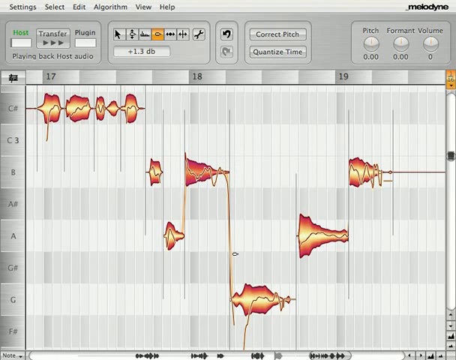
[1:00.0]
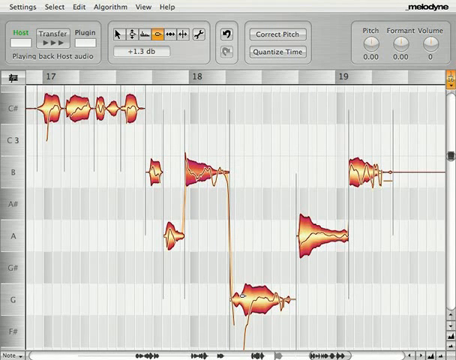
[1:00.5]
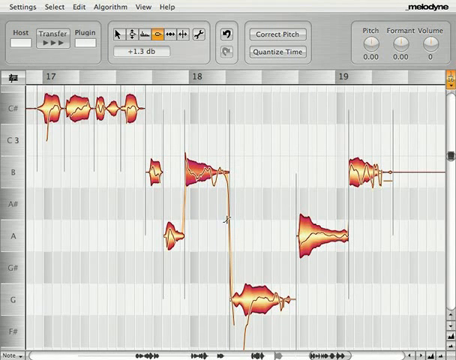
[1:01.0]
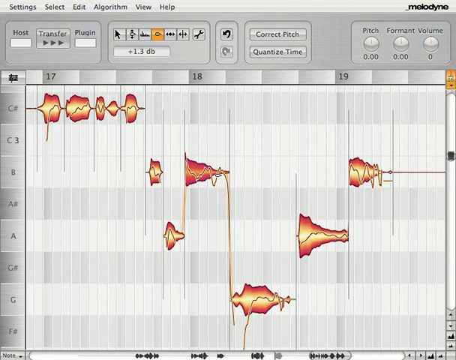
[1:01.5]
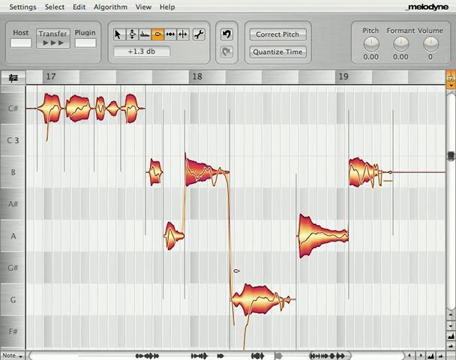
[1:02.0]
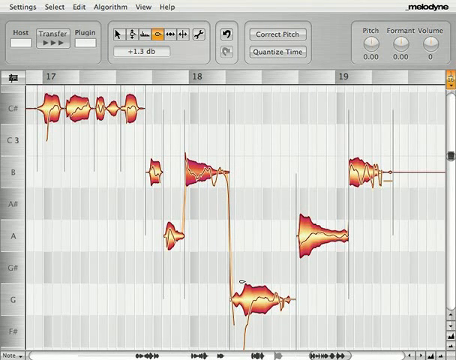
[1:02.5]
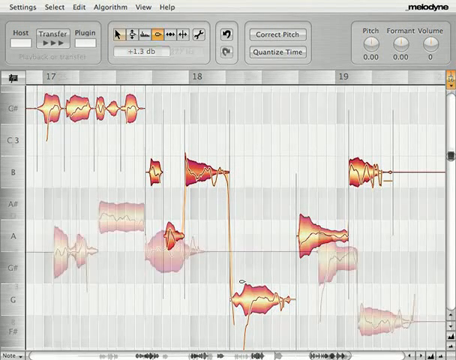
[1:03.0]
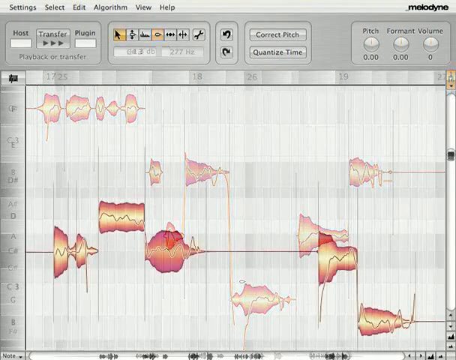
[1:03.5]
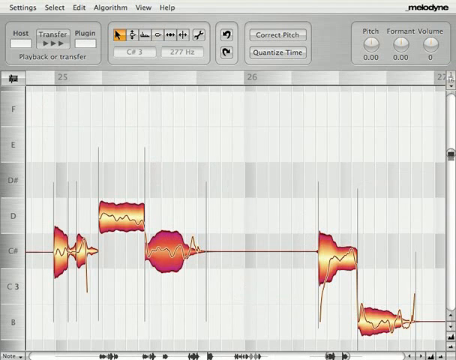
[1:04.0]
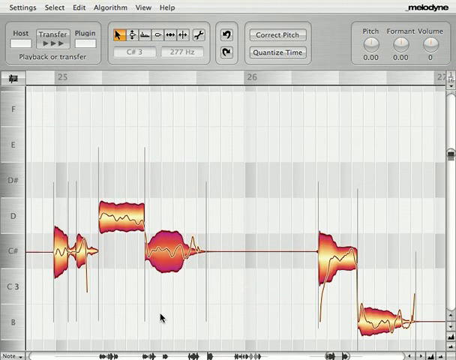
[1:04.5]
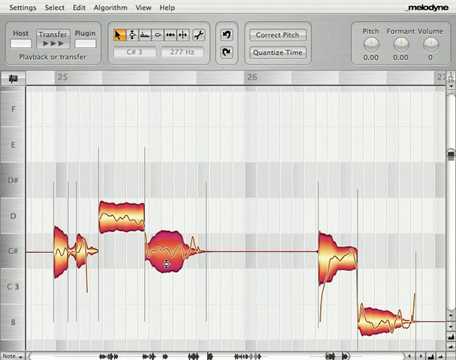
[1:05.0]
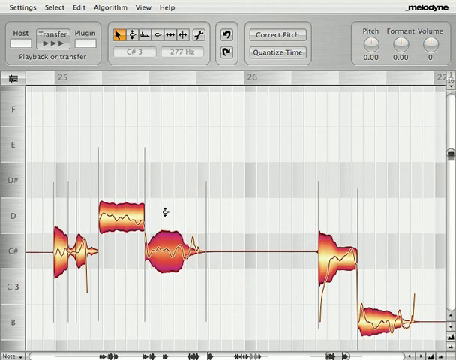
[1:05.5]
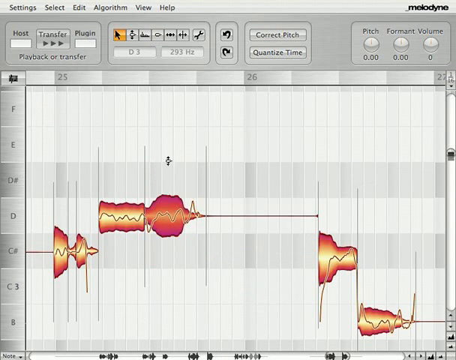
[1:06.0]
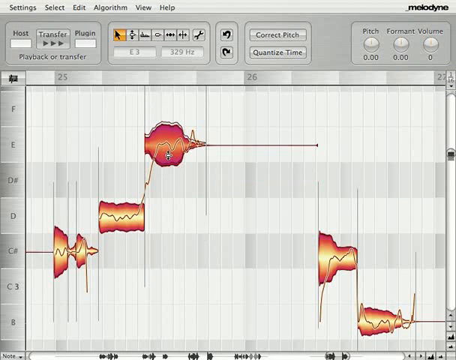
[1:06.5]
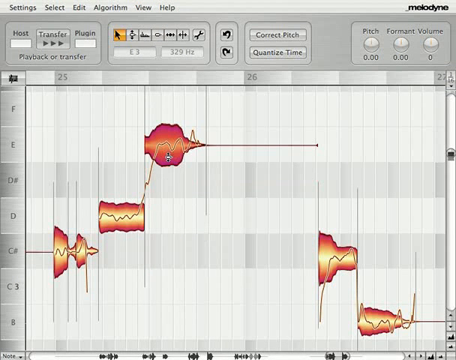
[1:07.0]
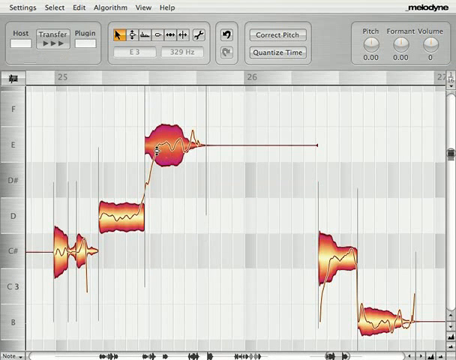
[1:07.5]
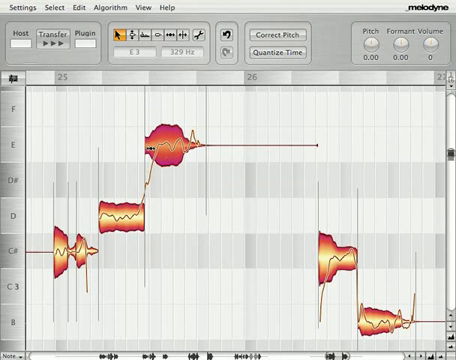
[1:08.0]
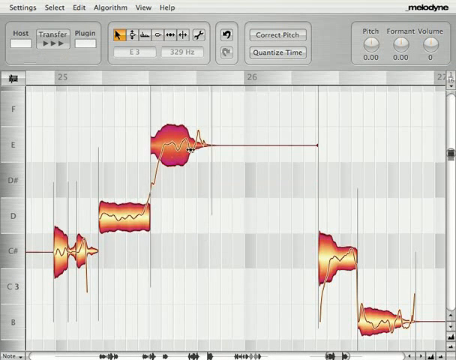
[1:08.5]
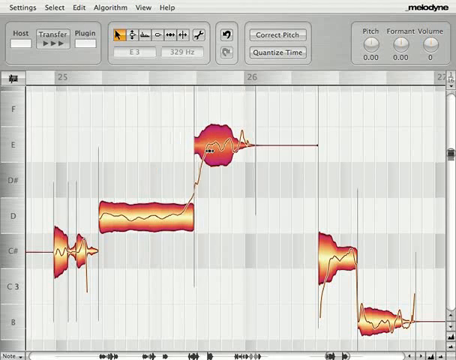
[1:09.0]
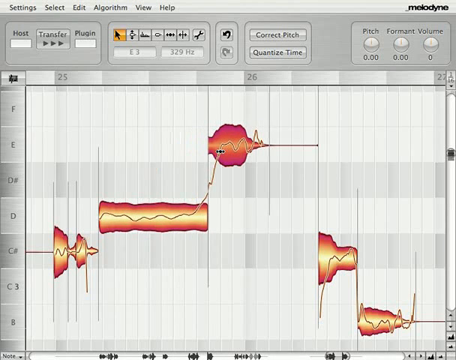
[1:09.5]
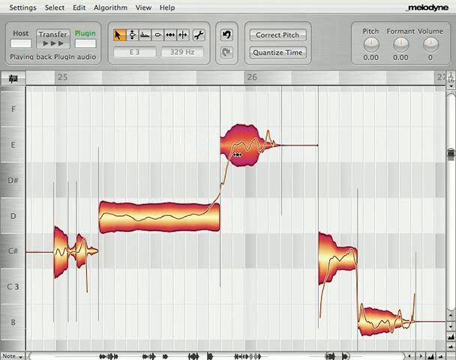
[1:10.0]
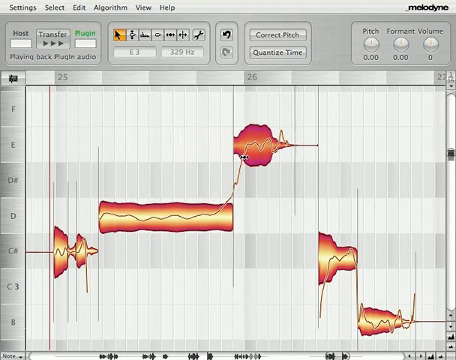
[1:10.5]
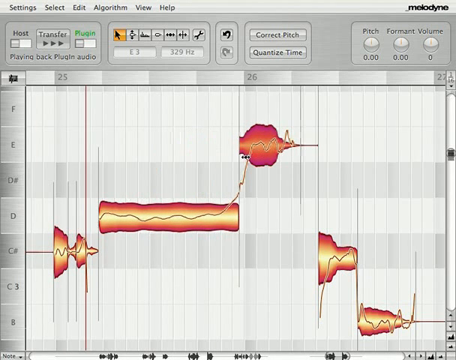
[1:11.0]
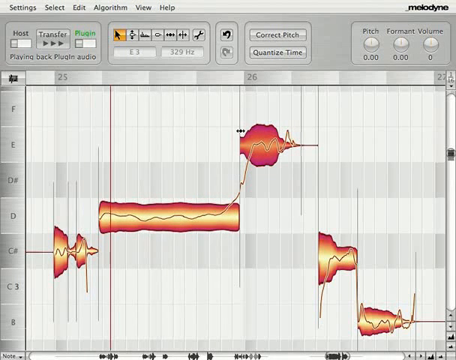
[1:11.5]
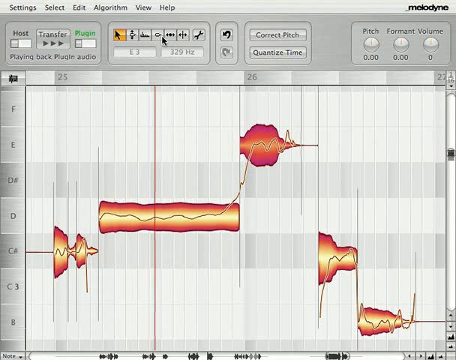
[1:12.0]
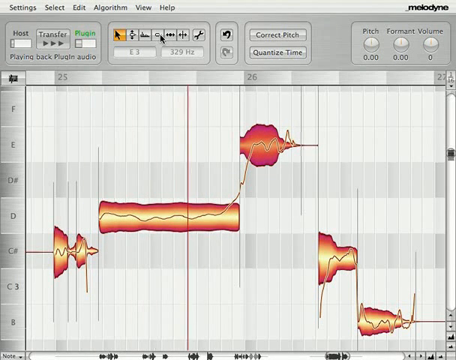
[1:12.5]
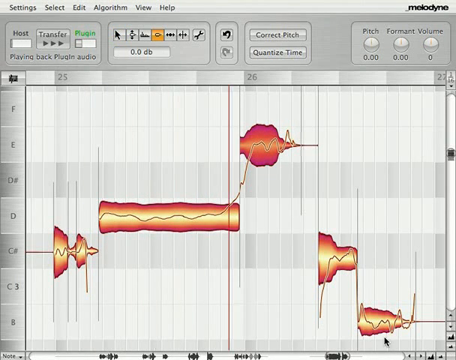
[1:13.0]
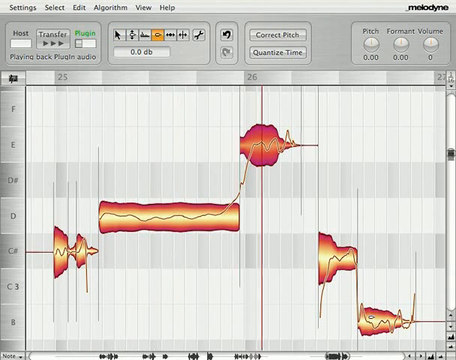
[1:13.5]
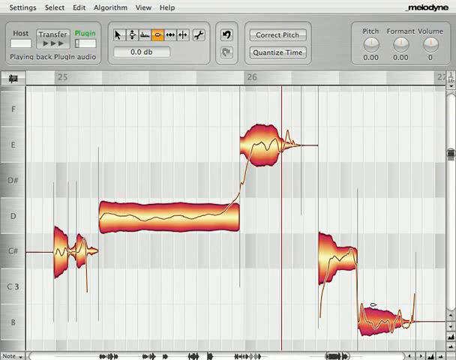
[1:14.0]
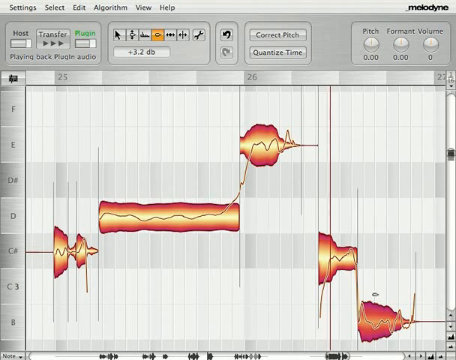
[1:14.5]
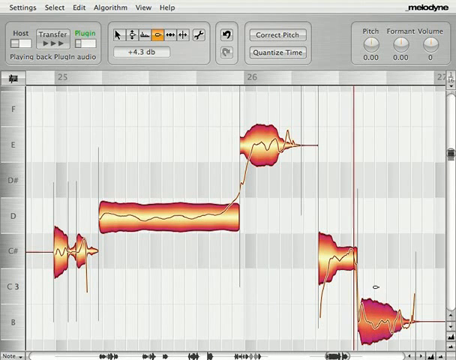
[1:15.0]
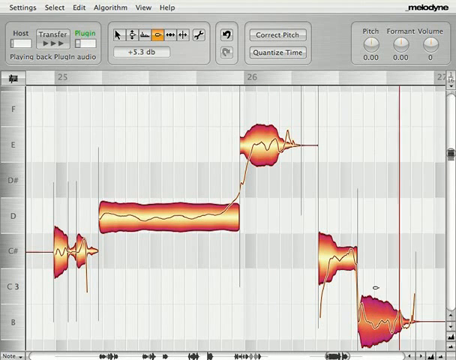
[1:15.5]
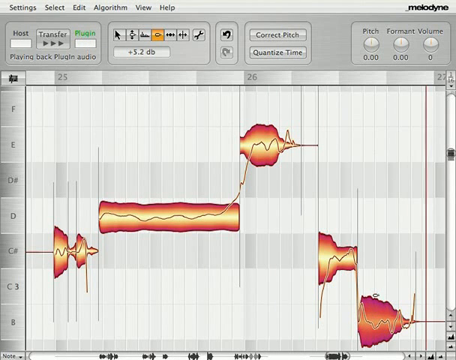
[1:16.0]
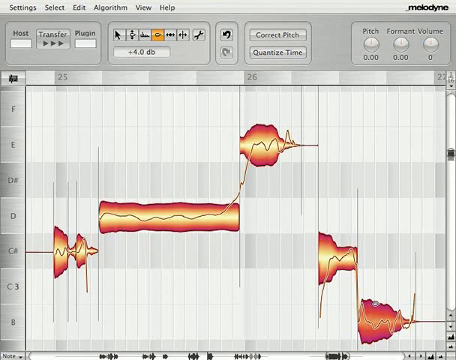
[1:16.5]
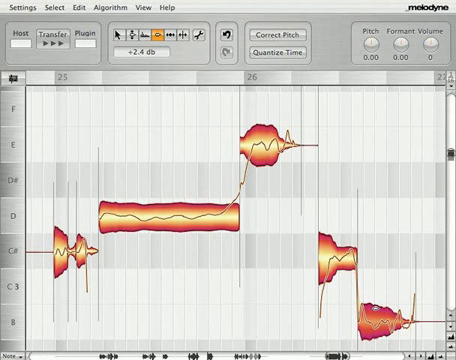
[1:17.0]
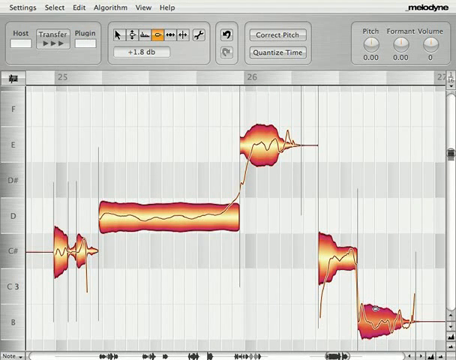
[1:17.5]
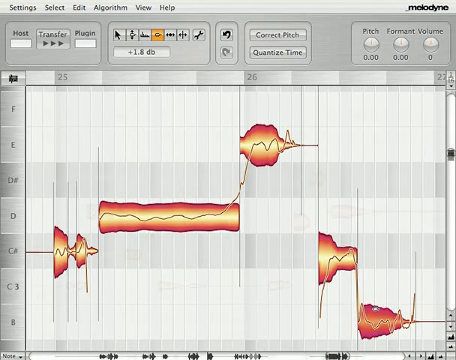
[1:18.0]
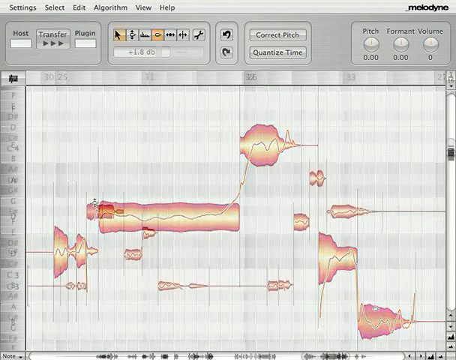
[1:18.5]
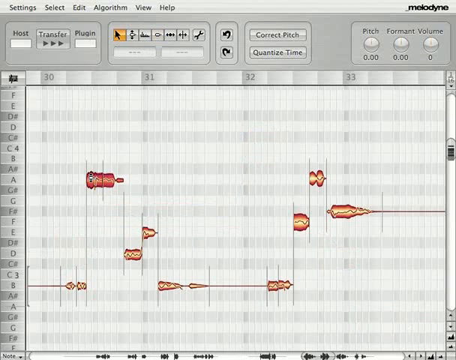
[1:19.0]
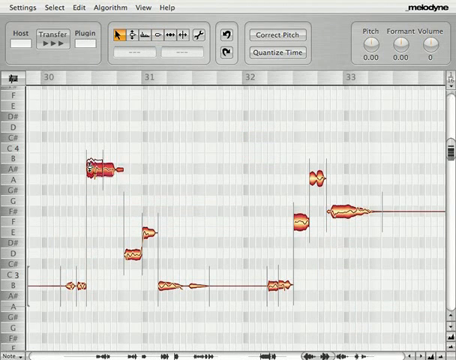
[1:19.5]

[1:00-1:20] The music playback software is shown. In the upper left are several buttons: settings, select, edit, algorithm, view and help. In the far upper right is the software's brand name, Melodyne. The person uses the mouse to manipulate the notes, apparently making a note play longer by stretching it out to the right, seemingly on the C column. They move the different musical frequencies around within the software, and a red line moves across the screen from left to right.